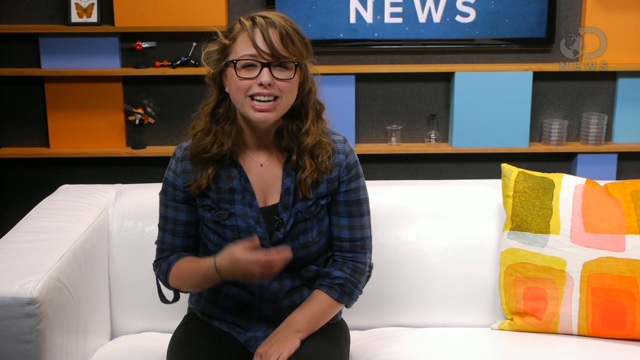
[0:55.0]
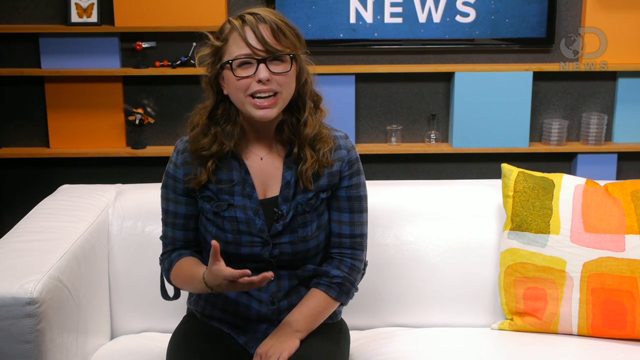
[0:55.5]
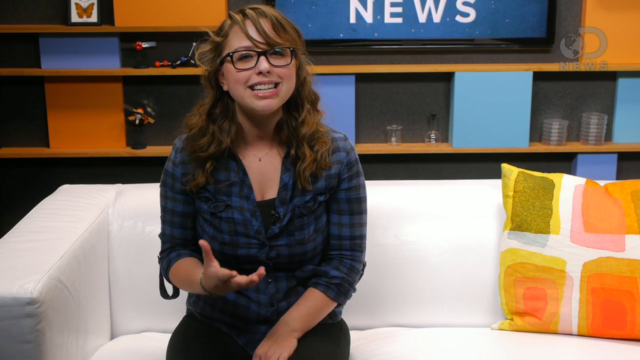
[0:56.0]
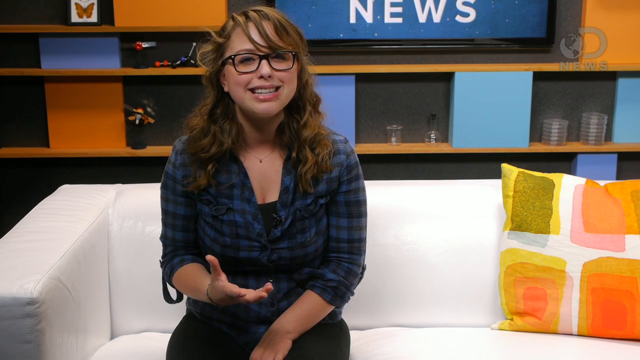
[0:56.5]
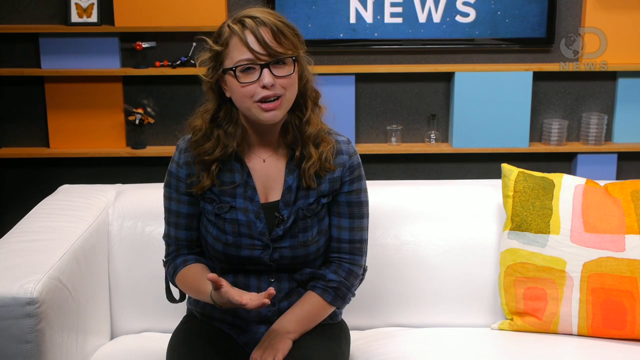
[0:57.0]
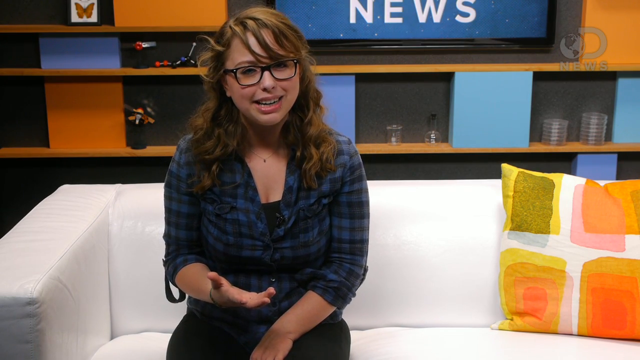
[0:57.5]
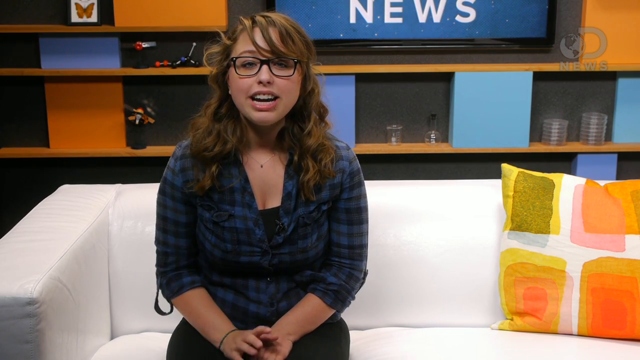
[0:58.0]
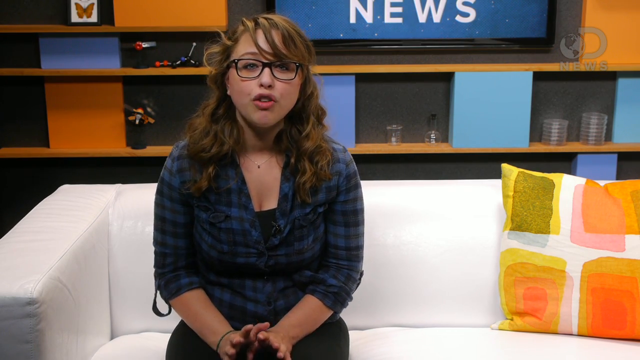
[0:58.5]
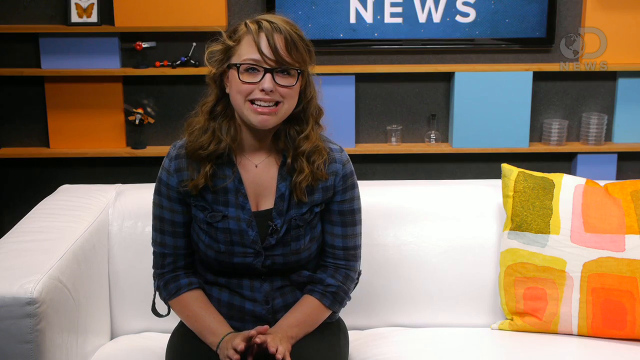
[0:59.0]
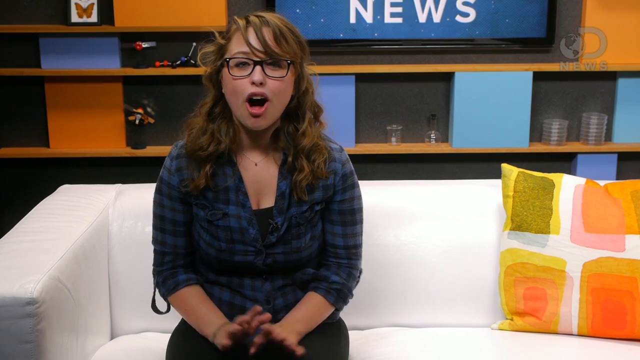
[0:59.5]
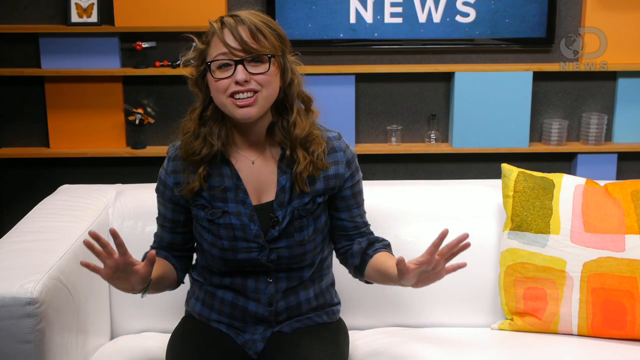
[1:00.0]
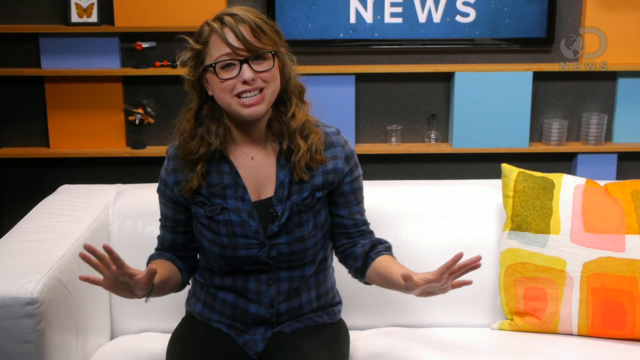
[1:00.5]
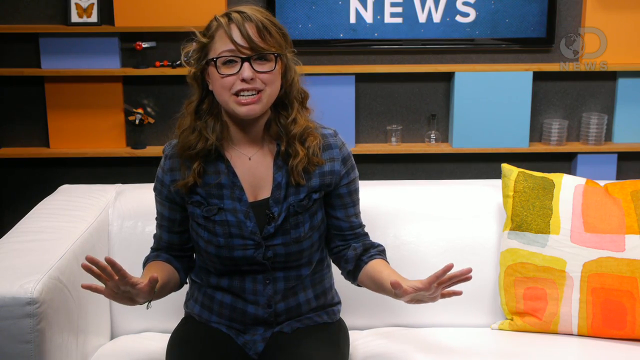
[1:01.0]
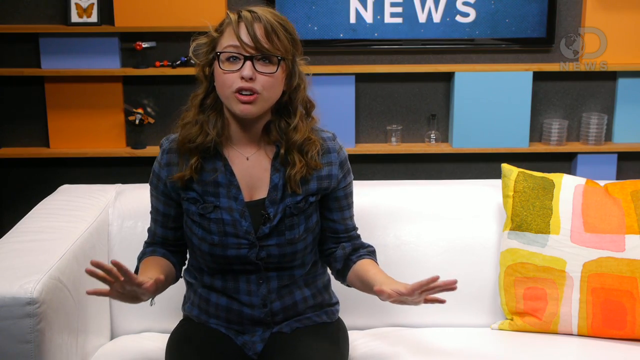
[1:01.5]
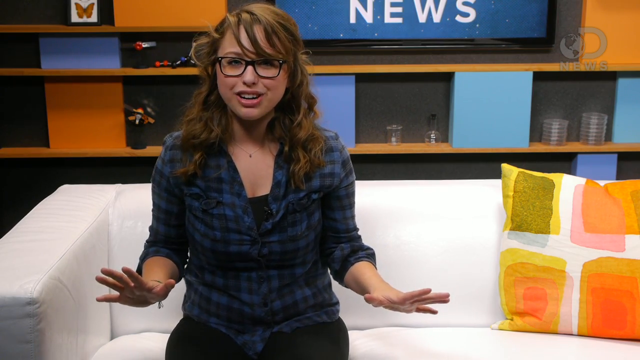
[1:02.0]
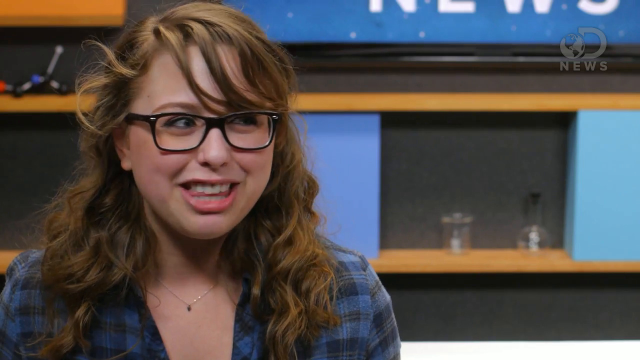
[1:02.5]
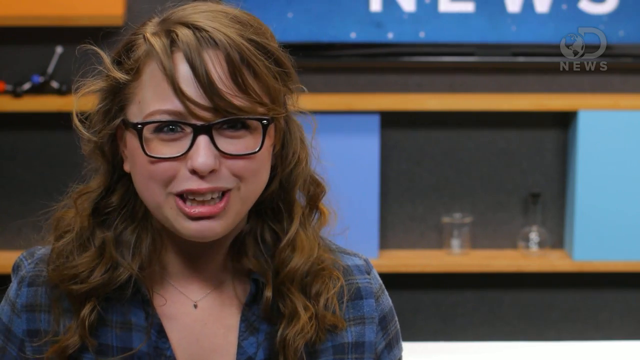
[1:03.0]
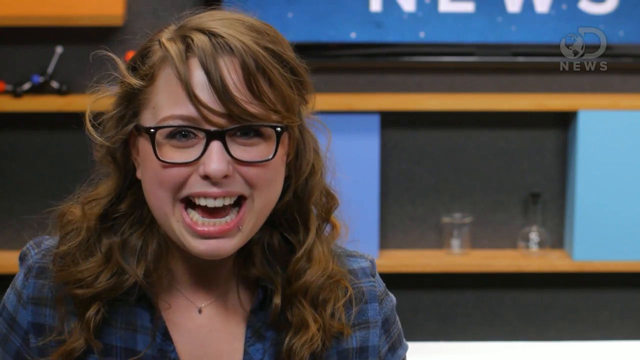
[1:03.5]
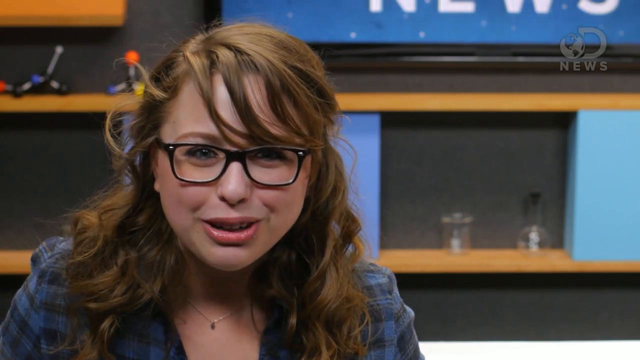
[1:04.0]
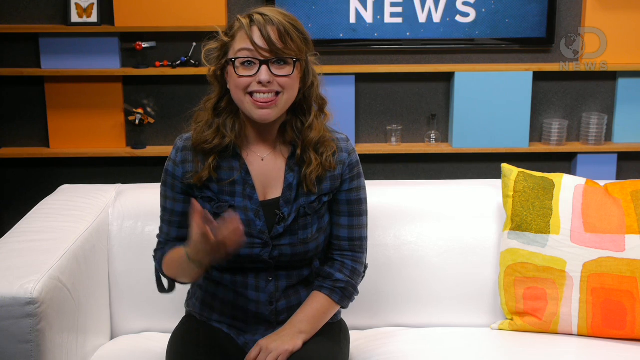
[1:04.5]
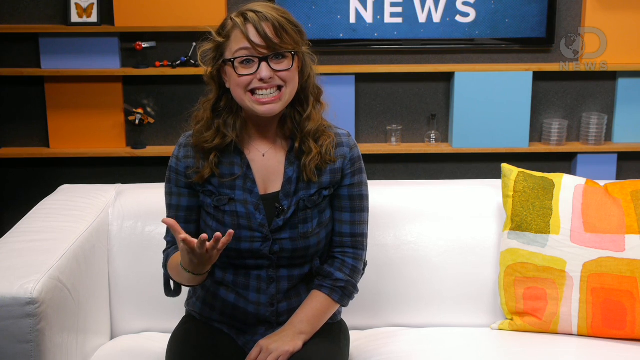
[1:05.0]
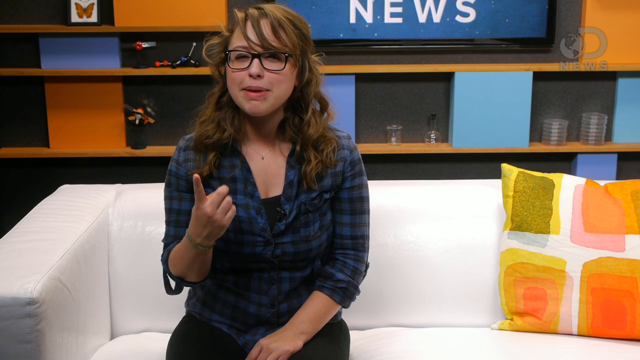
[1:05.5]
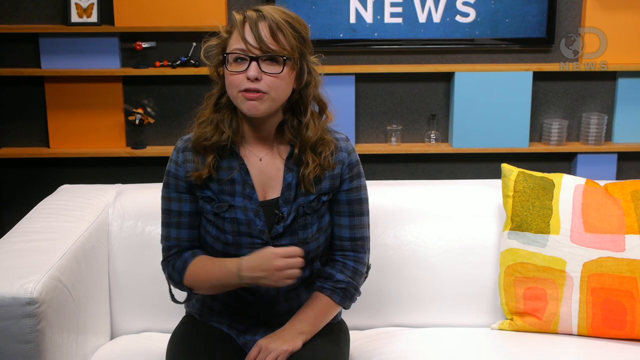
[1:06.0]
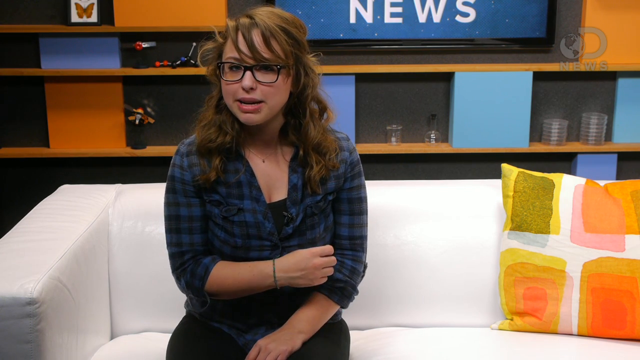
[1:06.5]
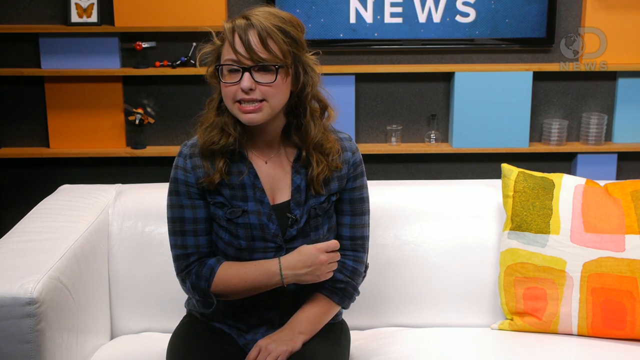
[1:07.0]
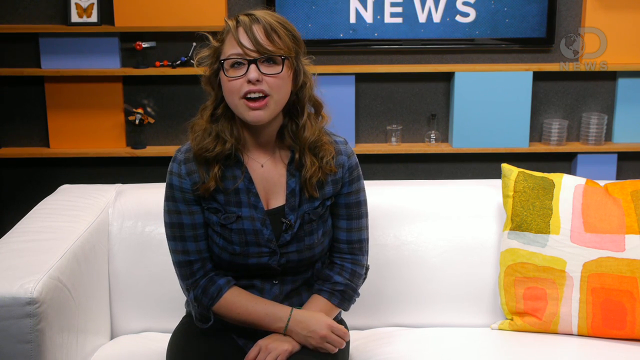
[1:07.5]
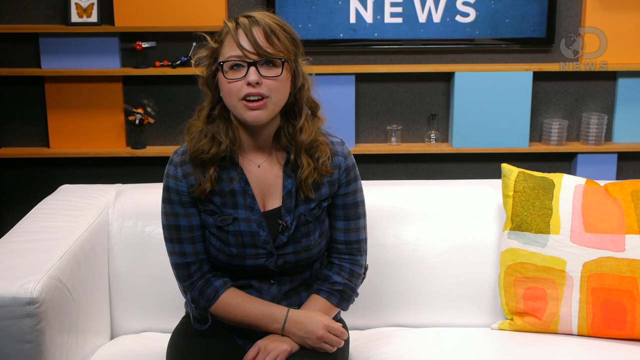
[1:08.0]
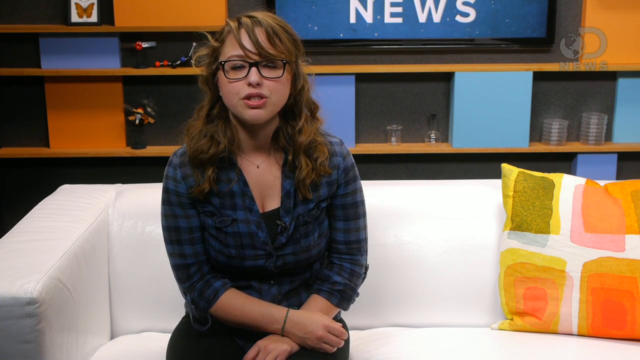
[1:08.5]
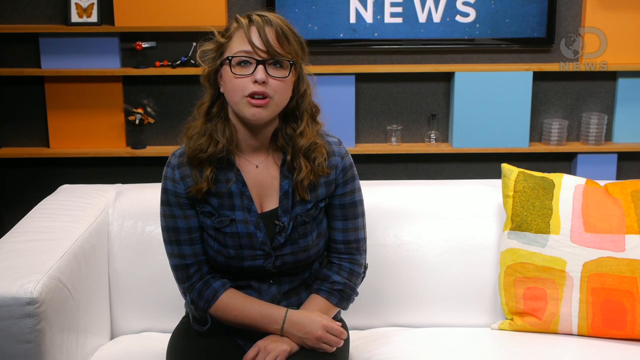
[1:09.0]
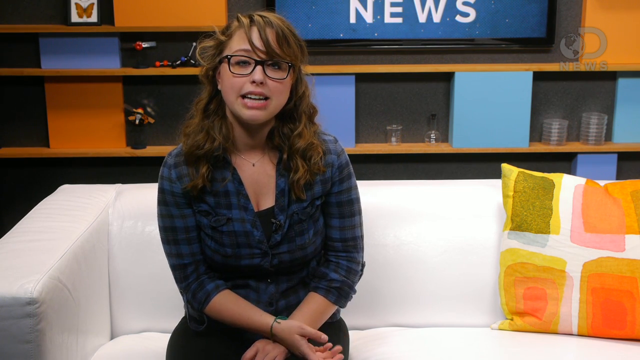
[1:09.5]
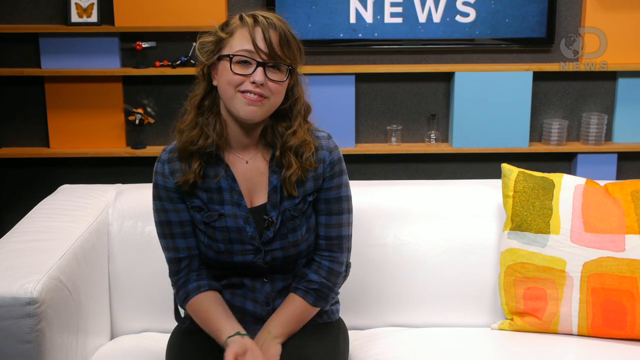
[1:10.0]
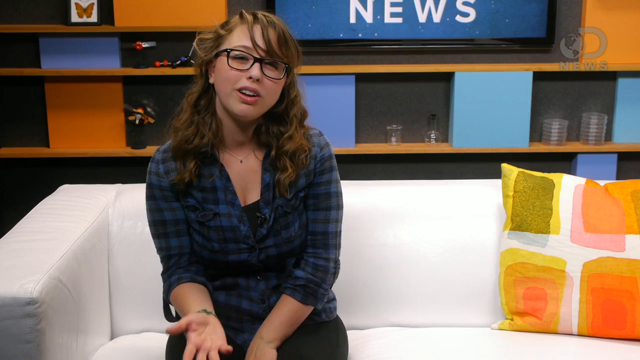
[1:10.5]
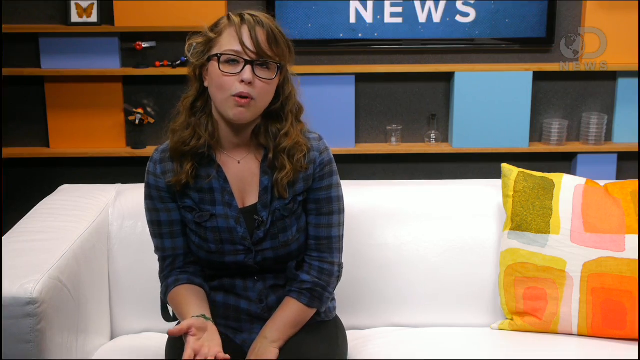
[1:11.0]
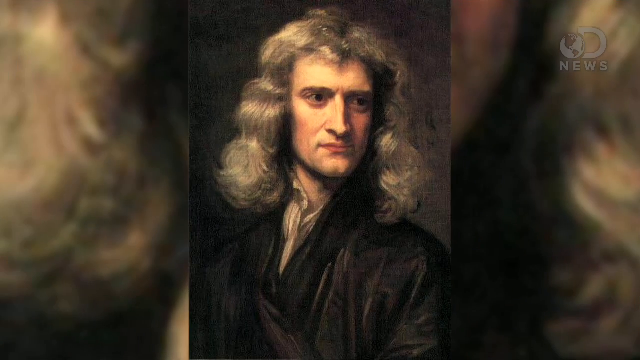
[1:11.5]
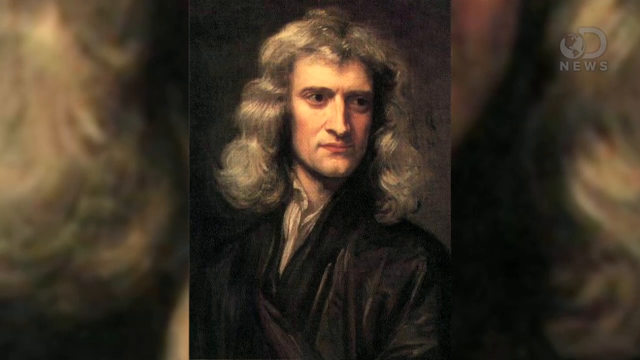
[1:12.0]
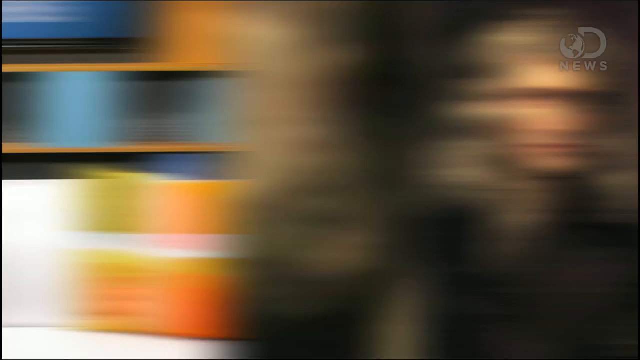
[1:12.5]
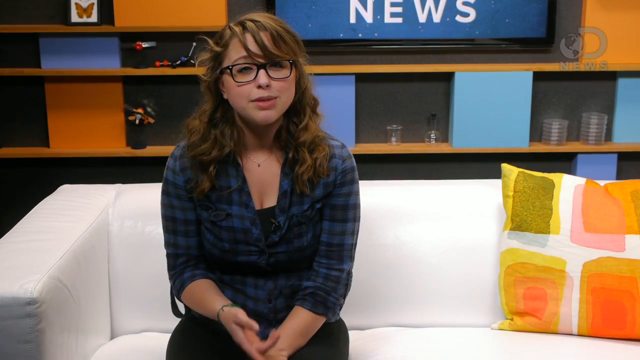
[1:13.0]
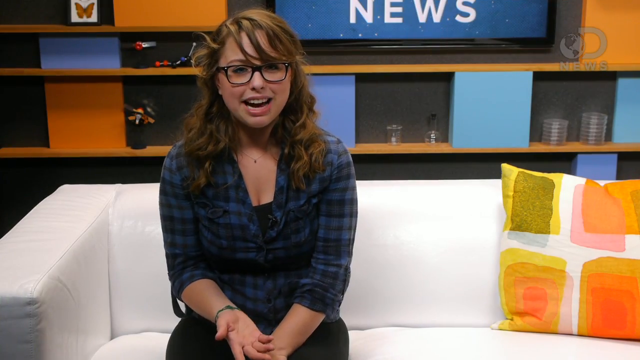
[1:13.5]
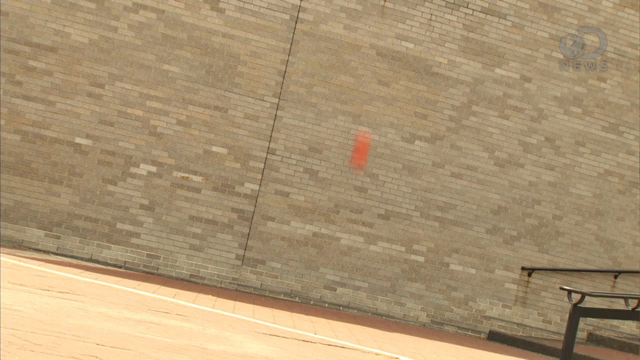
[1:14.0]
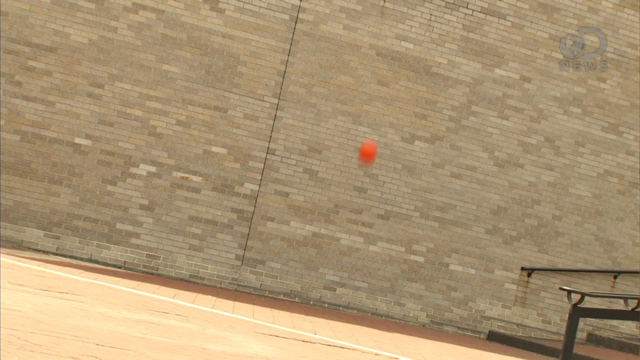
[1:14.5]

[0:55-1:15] The same woman sits on the couch, happy and smiling, talking a little with her hands and wearing a bracelet. The video cuts to a picture of a man that looks like a drawing but could also be a photograph. In the background an orange basketball is thrown toward a wall that is probably gray and might be brick; the ball bounces, hits the wall and bounces again. The man looks like he is maybe from a century or two ago, with a long, thin, pointed nose and a stoic, very serious look. His hair is white, maybe shoulder length and a little bushy, either frizzy or curly. He could possibly be a scientist.